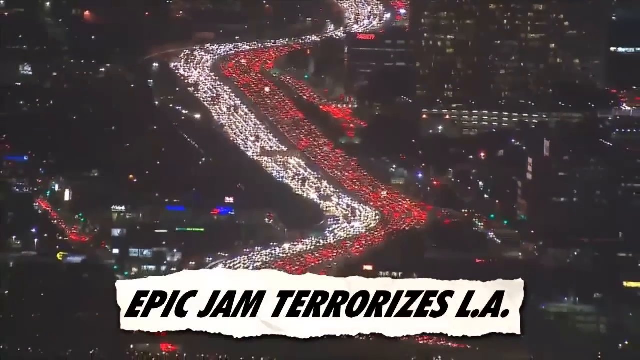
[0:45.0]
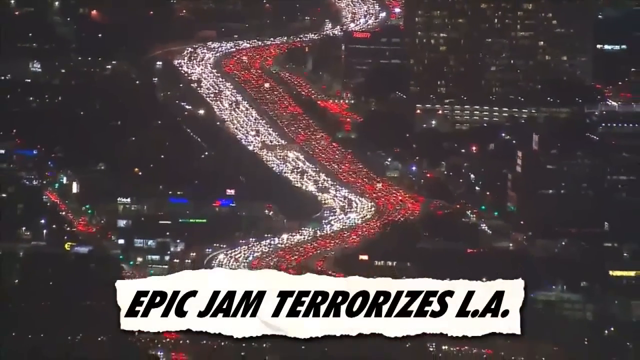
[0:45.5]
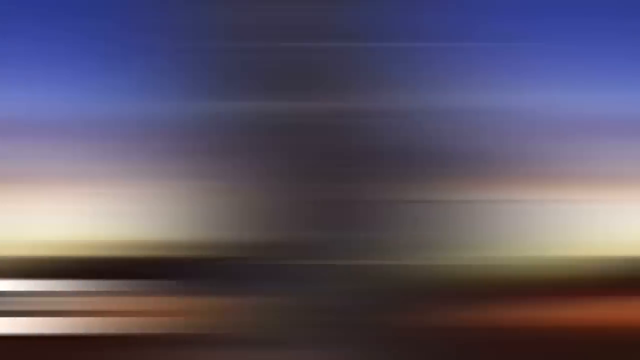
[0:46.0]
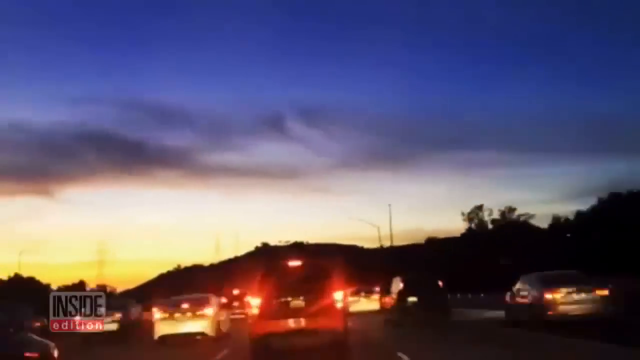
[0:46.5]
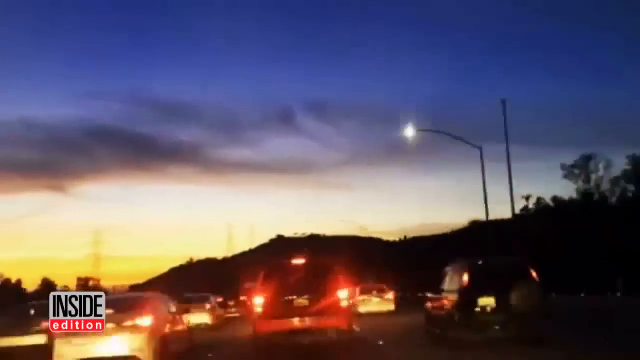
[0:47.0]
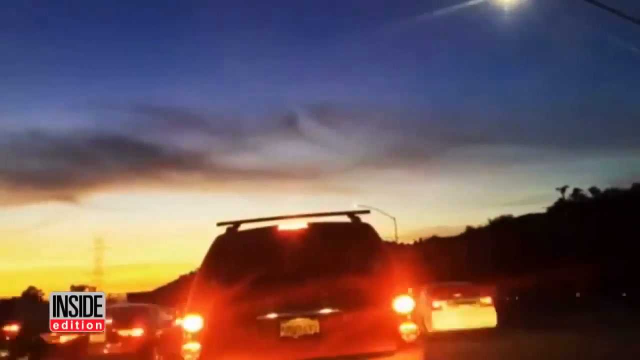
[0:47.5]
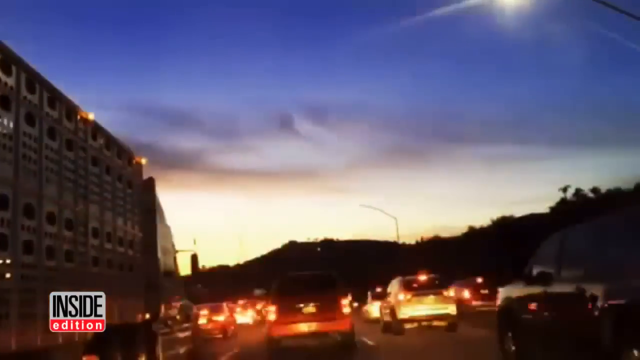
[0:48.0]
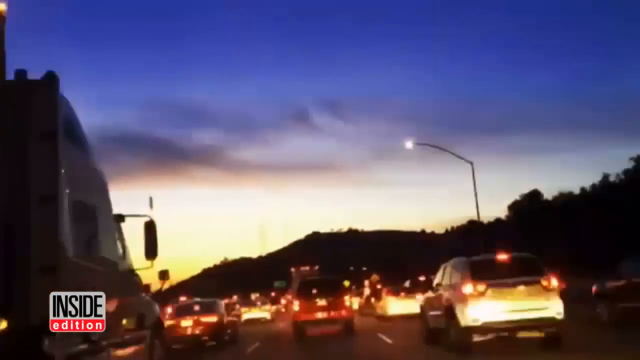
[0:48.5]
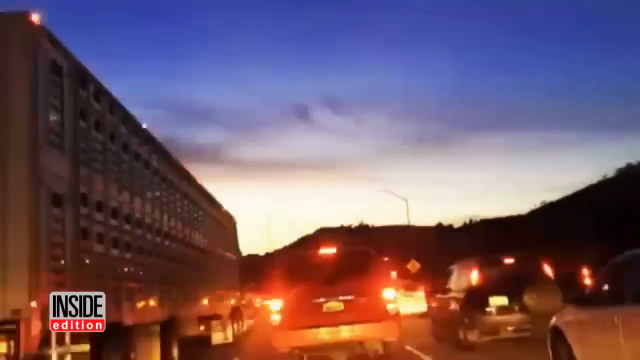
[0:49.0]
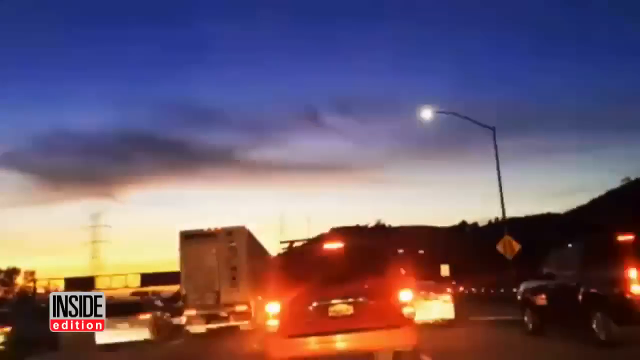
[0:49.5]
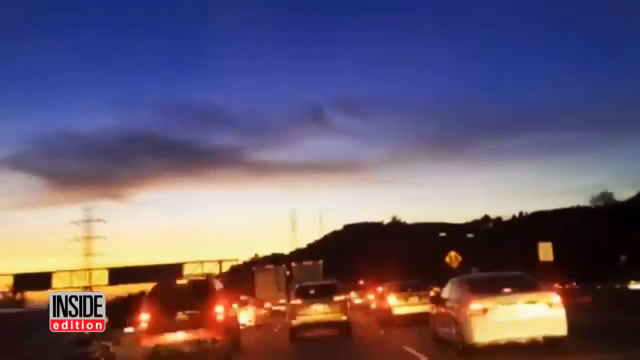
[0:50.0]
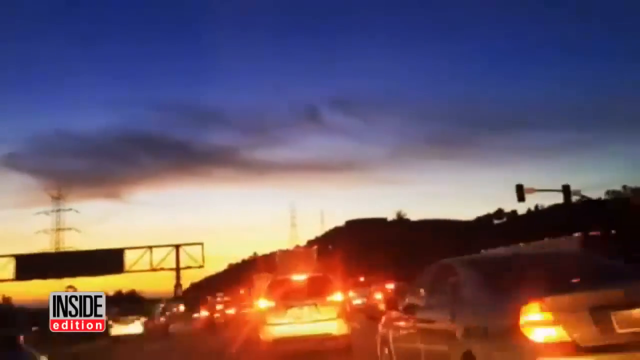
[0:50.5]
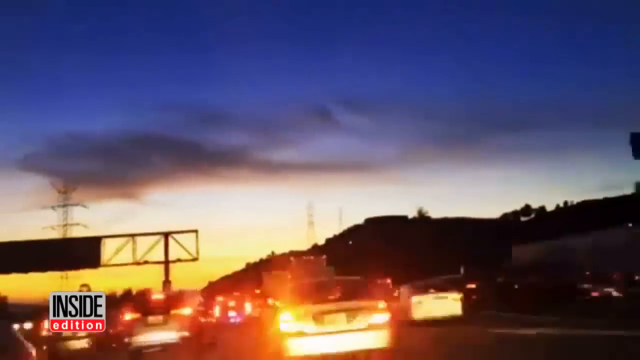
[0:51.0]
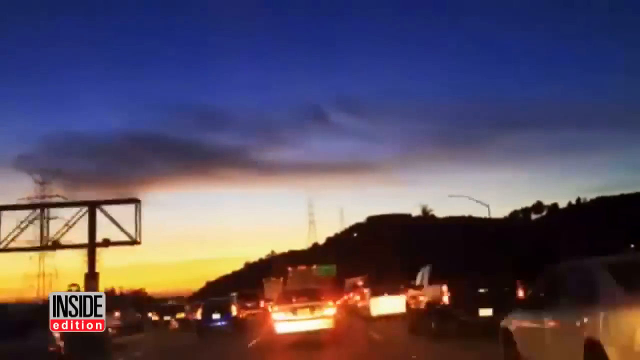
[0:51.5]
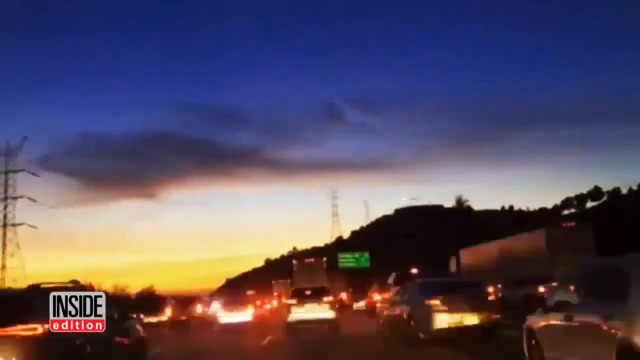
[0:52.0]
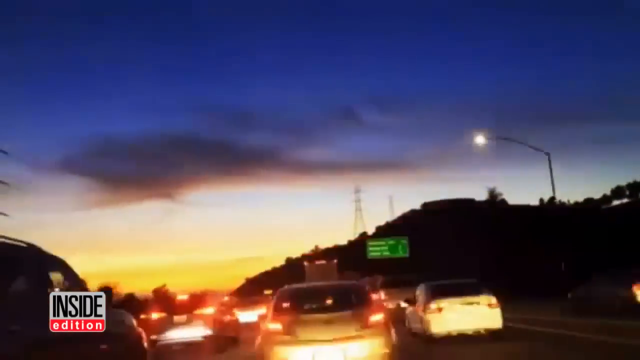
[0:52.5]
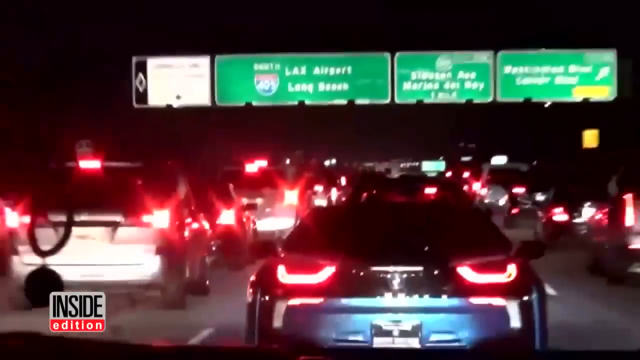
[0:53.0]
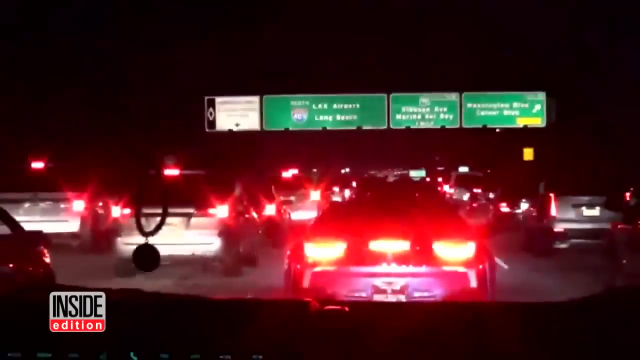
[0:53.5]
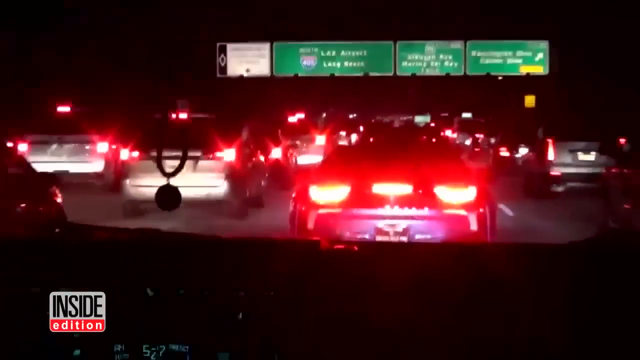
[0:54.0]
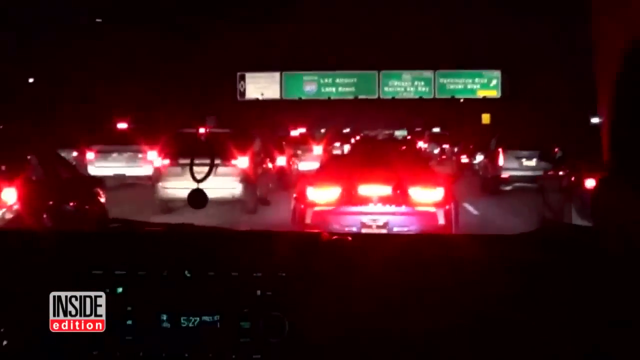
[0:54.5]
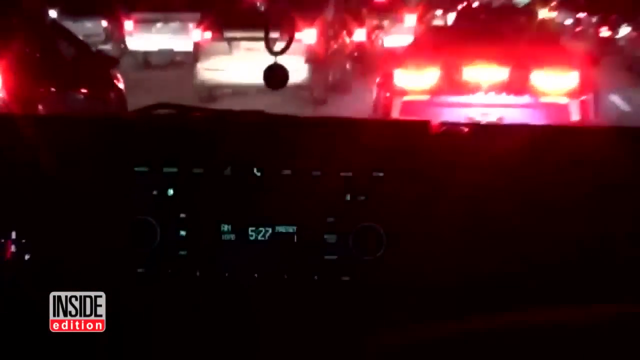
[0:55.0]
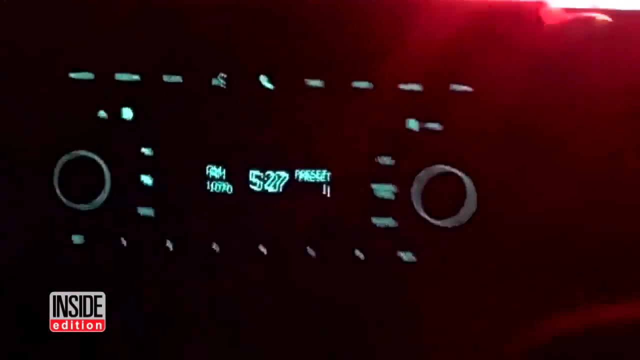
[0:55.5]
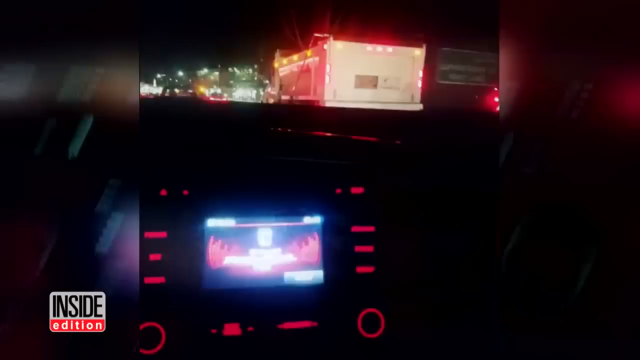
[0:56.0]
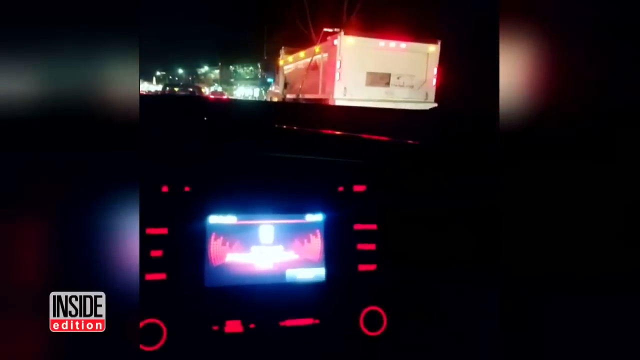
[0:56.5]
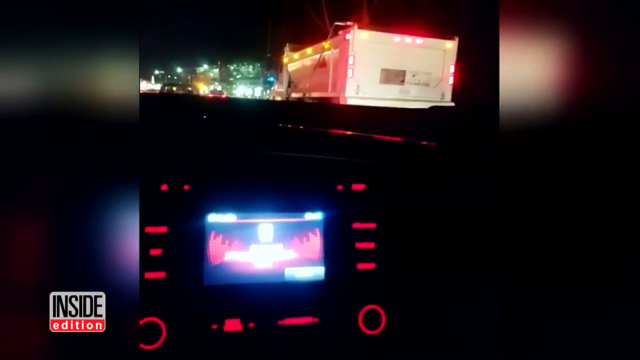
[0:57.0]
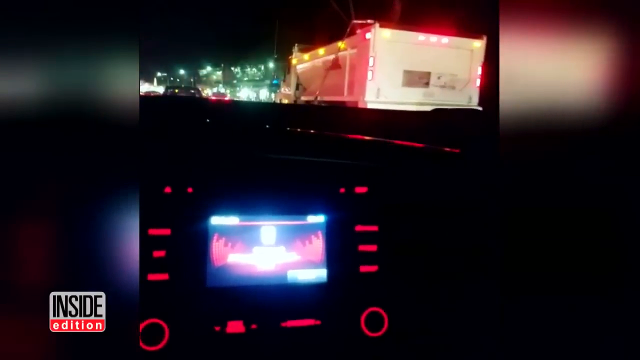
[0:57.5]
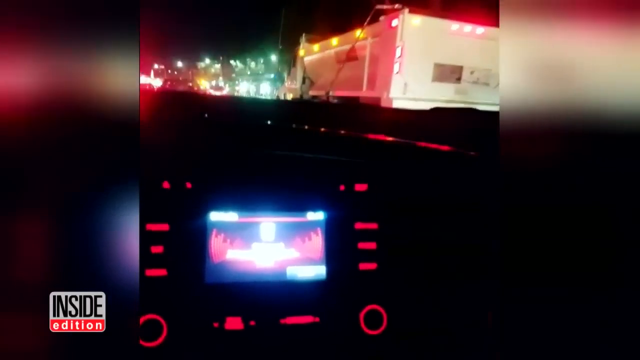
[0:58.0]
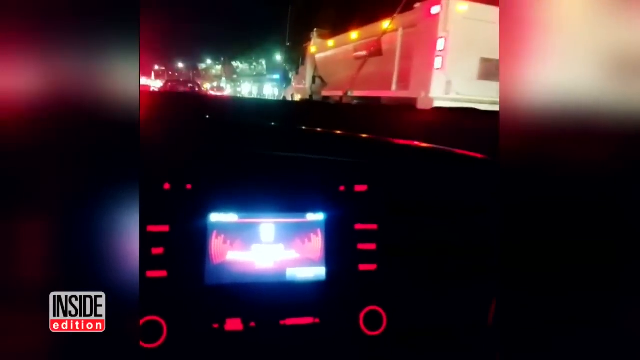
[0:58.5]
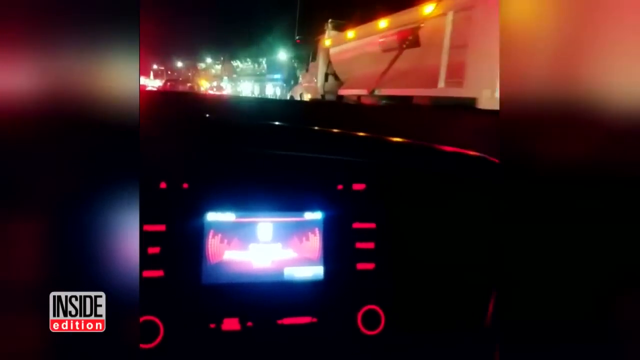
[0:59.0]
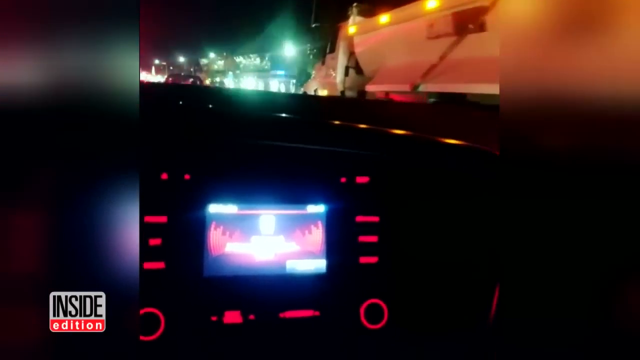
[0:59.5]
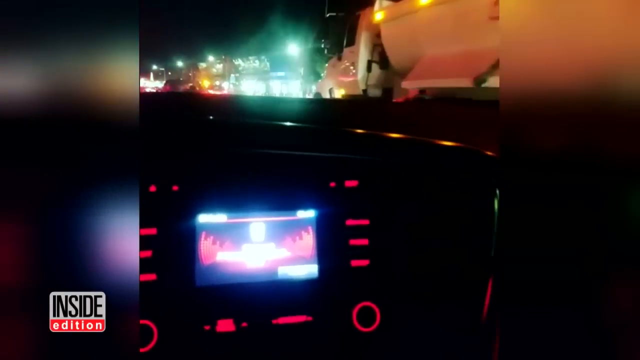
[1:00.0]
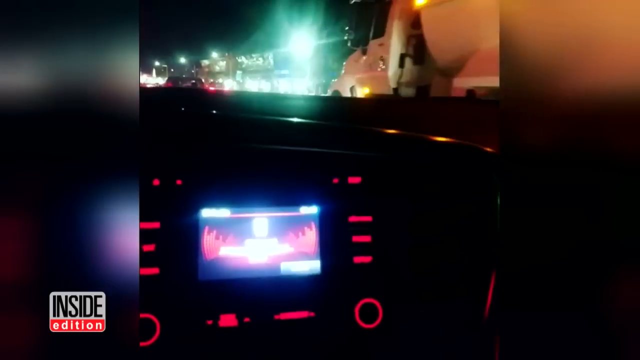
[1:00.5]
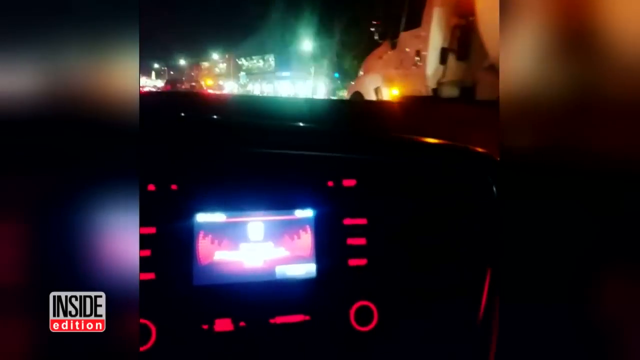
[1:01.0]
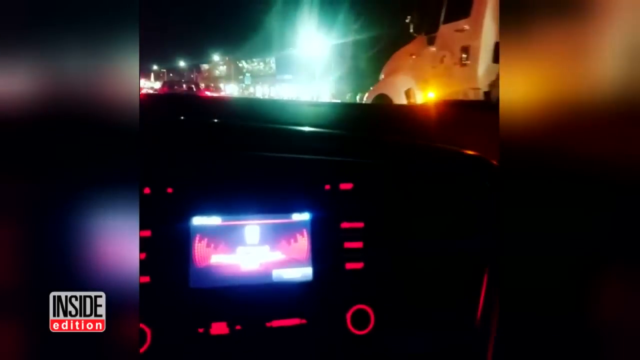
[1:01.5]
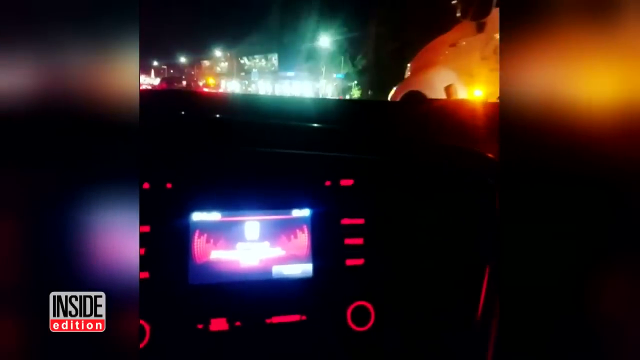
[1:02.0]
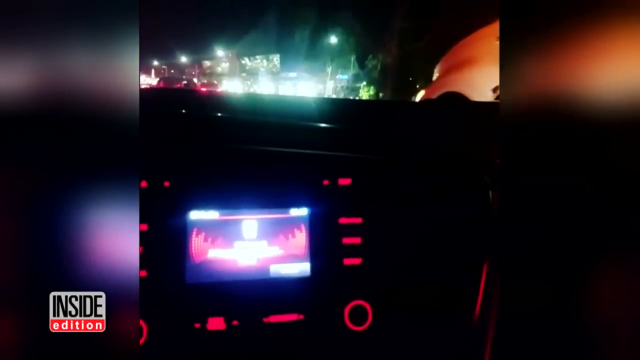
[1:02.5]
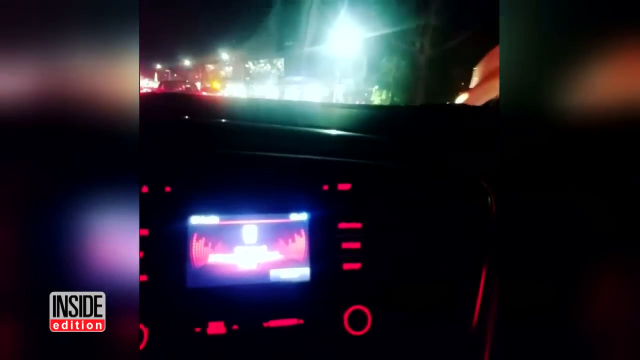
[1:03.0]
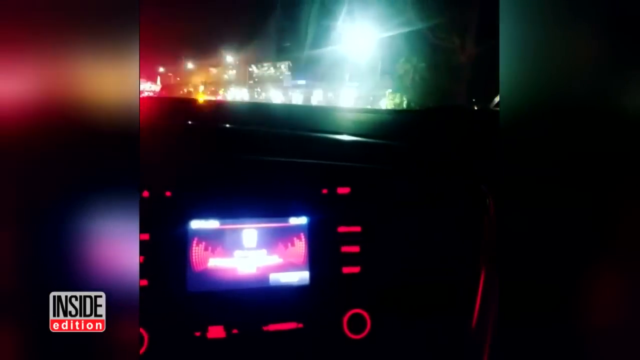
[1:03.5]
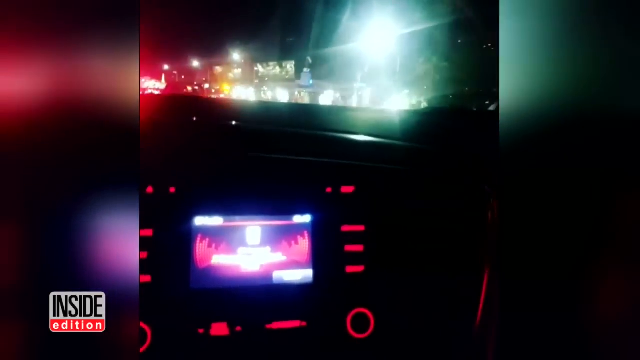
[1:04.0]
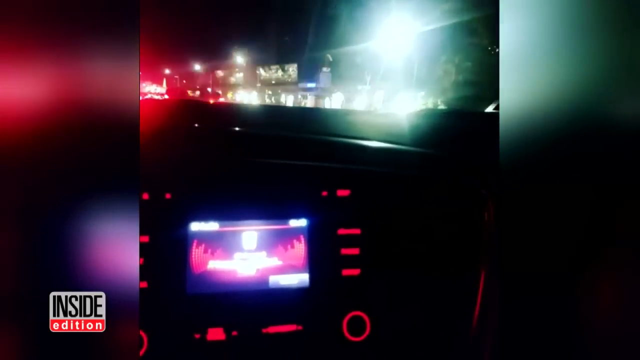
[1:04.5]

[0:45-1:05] An assortment of dash cam clips from different cars plays. The first, quite sped up, shows the traffic stopping and starting before dark, with the sun just starting to set. In another clip it is dark and the traffic is more at a dead stop, with lots of brake lights in the distance ahead. Another clip from someone's car looks like it is being recorded while driving, as the car very slowly crawls down the freeway while everything around it is stopped. Lots of trucks and cars surround it, and lots of lights flash in the distance.